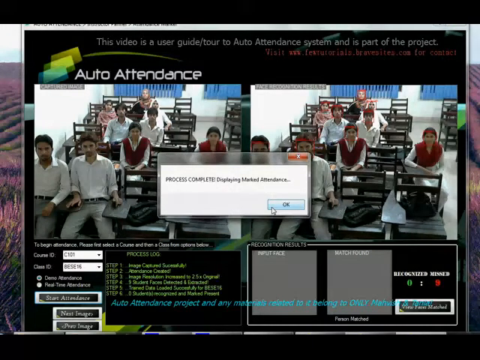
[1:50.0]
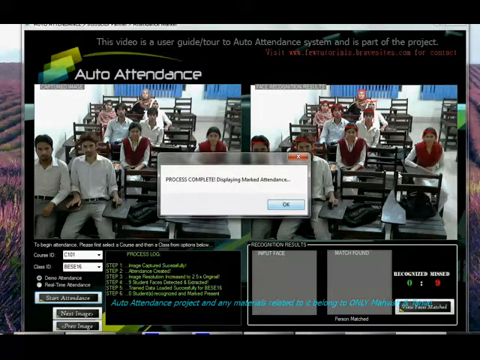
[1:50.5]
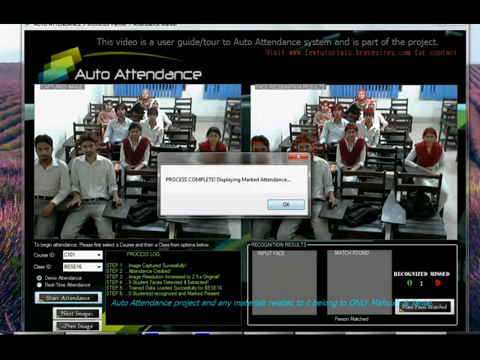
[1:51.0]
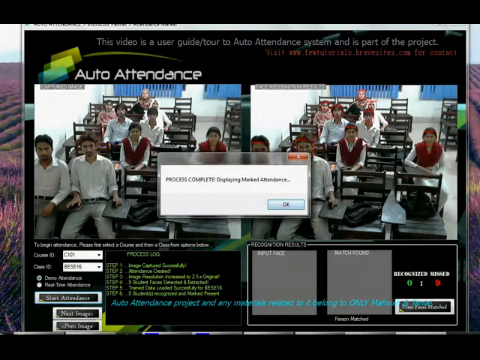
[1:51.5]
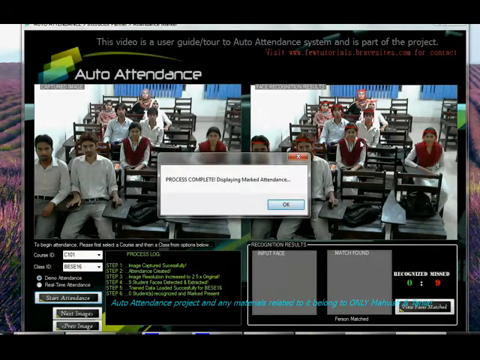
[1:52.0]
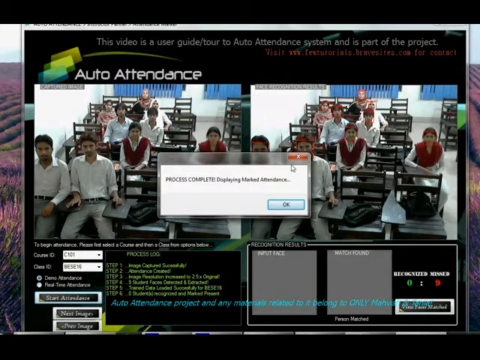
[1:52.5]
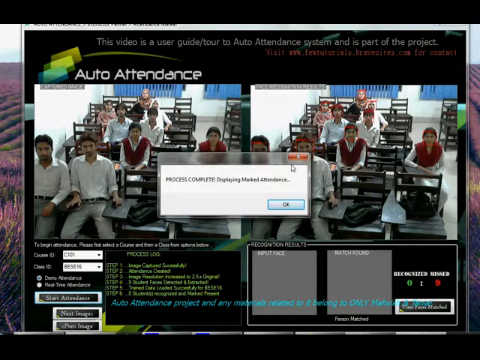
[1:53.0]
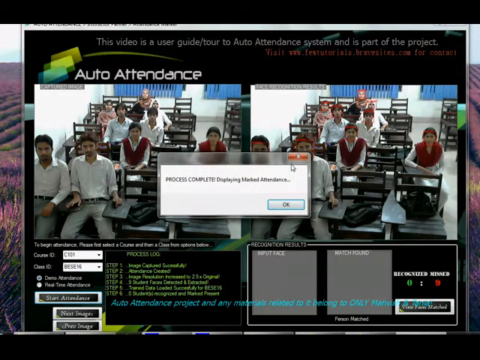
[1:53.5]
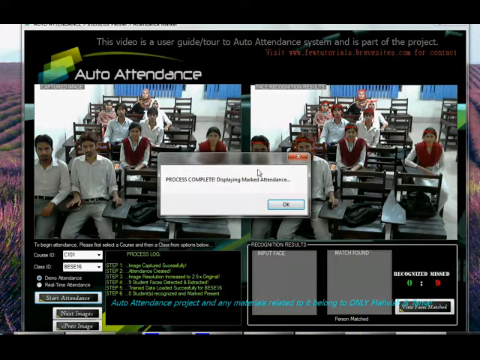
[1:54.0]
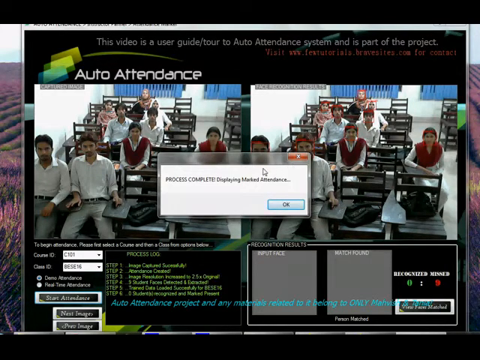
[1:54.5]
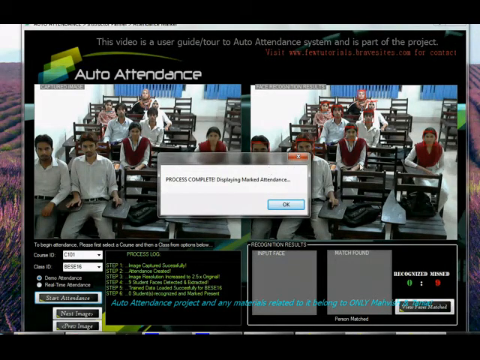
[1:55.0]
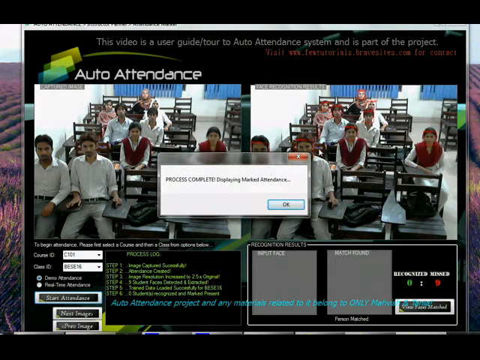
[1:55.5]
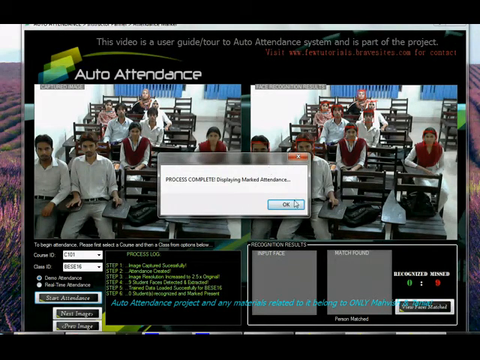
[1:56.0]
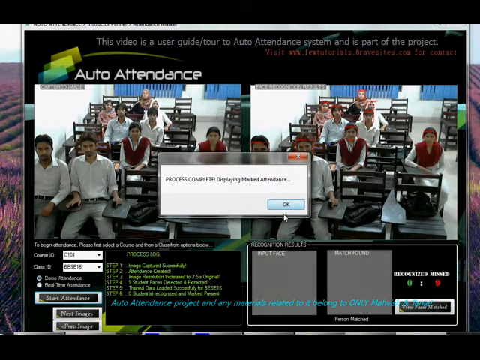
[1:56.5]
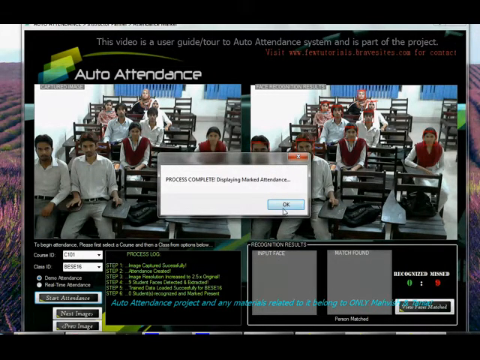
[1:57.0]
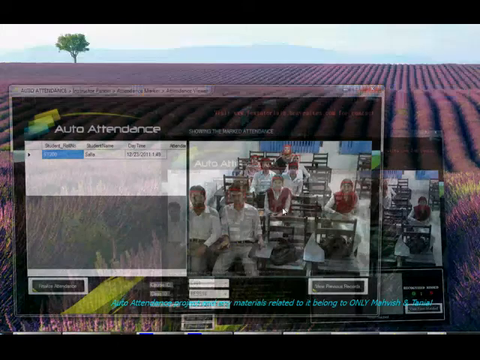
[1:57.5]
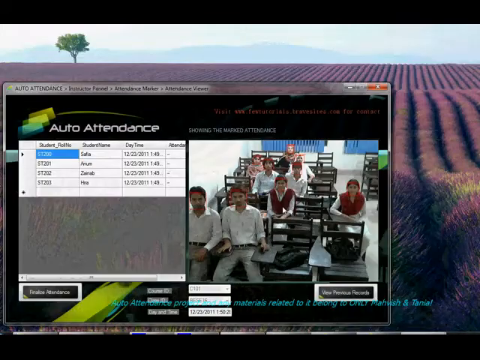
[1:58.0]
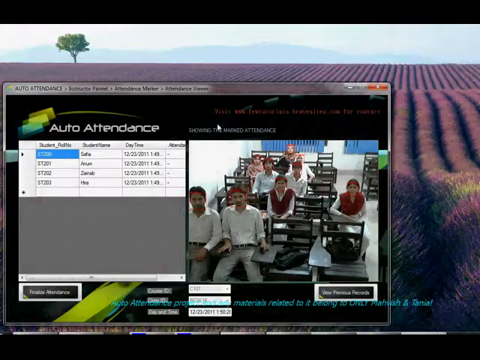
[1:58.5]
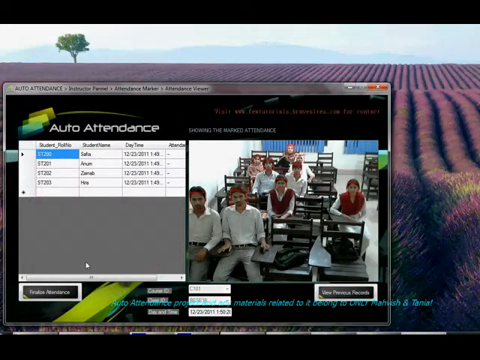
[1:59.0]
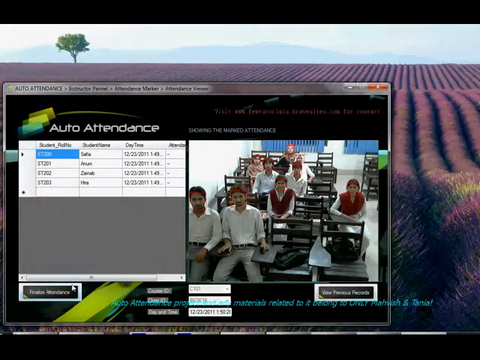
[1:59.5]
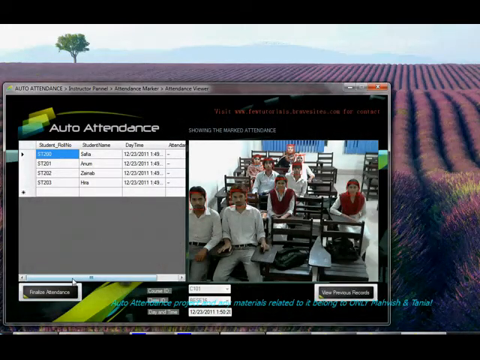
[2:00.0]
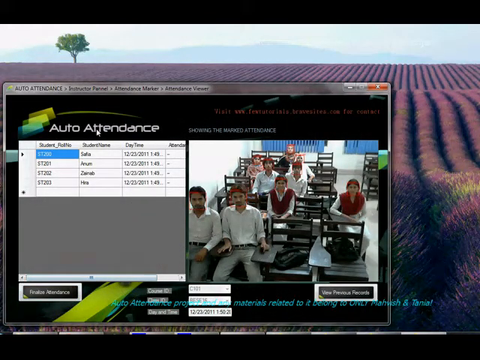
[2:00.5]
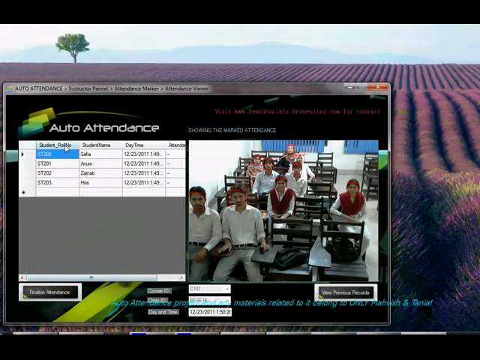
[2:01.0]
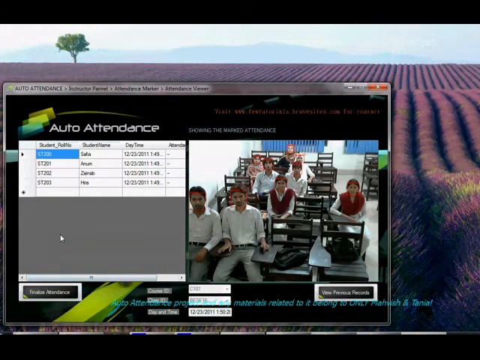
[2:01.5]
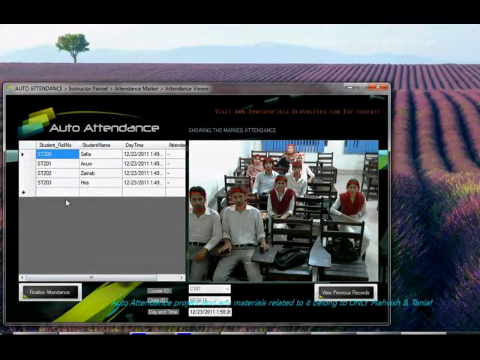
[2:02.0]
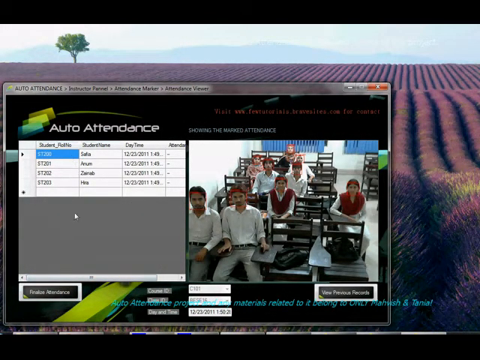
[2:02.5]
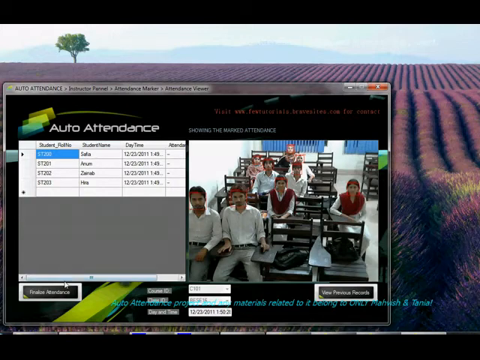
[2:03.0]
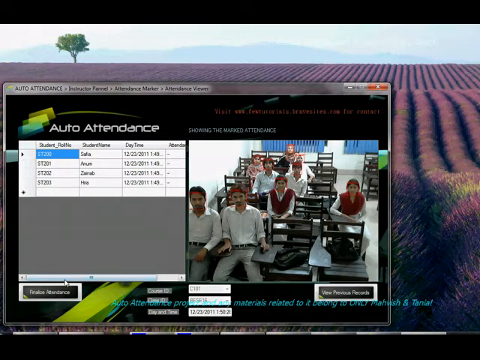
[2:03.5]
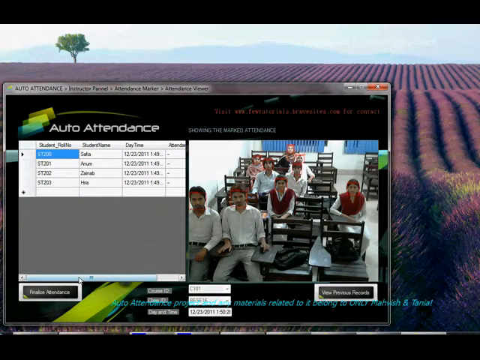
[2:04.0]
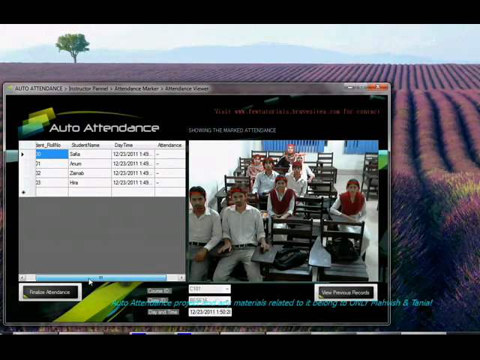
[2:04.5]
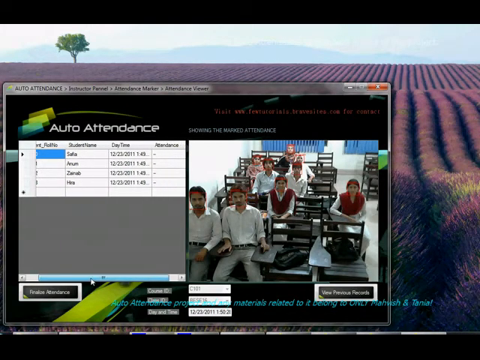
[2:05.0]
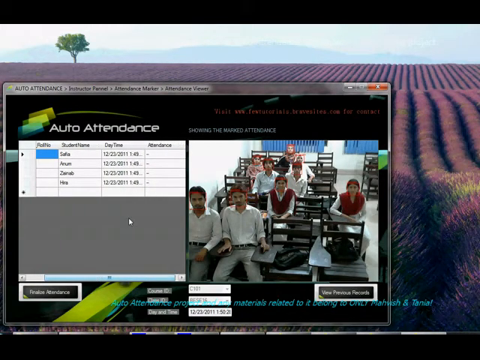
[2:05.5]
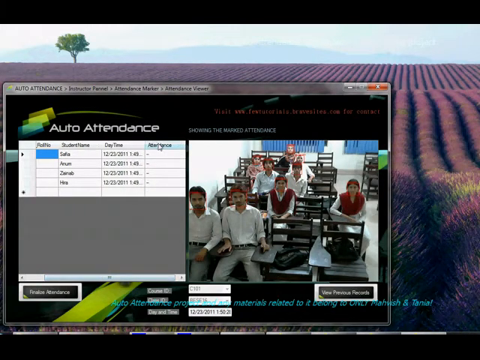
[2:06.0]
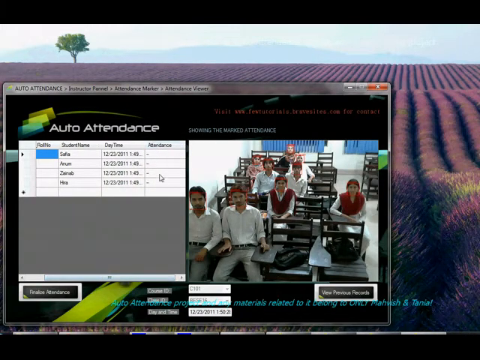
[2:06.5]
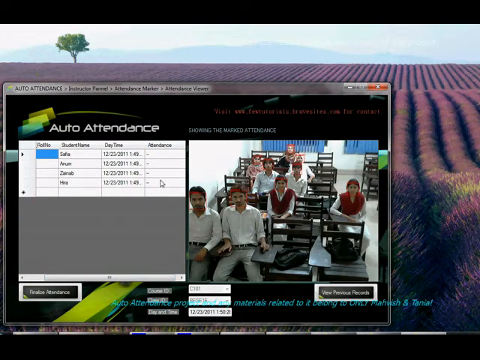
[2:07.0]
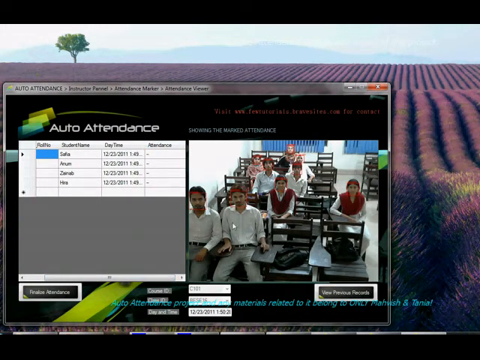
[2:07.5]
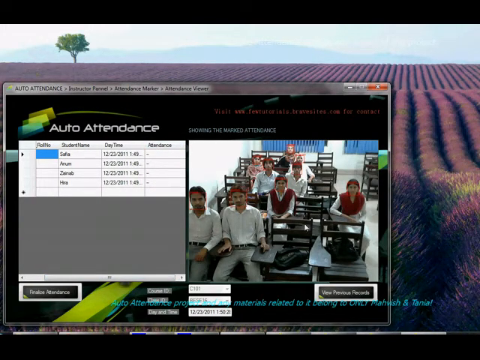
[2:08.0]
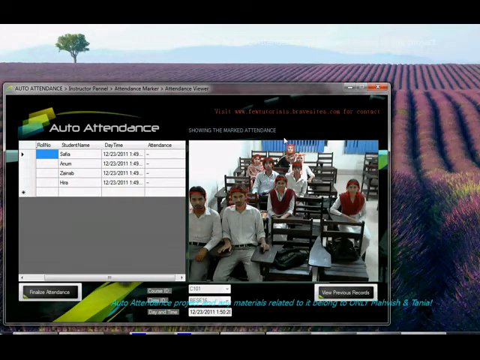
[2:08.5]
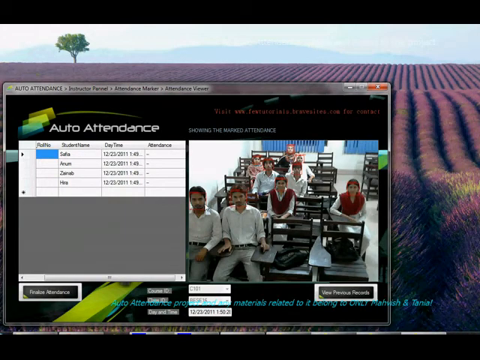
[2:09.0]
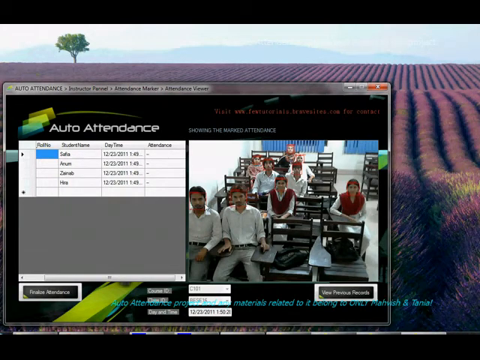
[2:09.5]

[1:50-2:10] Near the bottom, the attendance check appears to be complete. Two of the same pictures are displayed at the top, along with similar pictures. He goes into student profiles and selects one; the profiles appear to have a number assigned, followed by the student name, day and time, almost like a spreadsheet for checking attendance. There is lots of small text on the screen. Chairs and people are visible. In the second video, the people's faces are marked with what look like red circles, possibly indicating that they are registered with and recognized by the system.